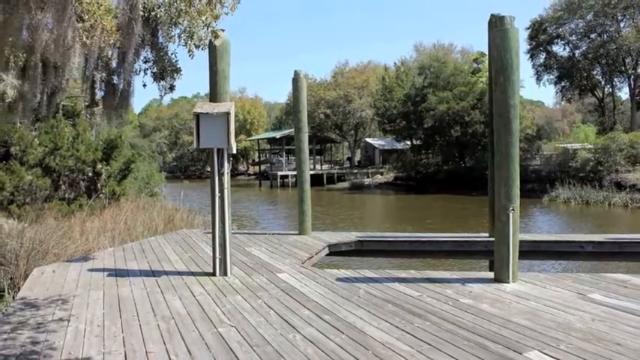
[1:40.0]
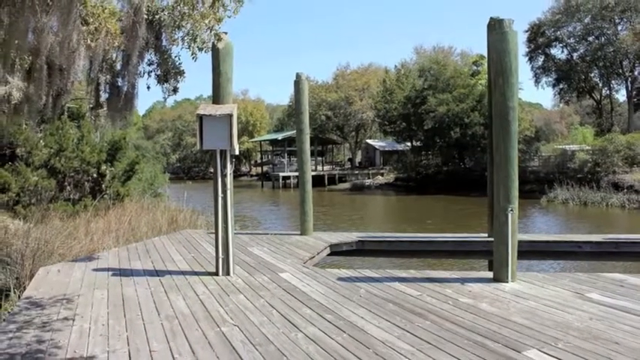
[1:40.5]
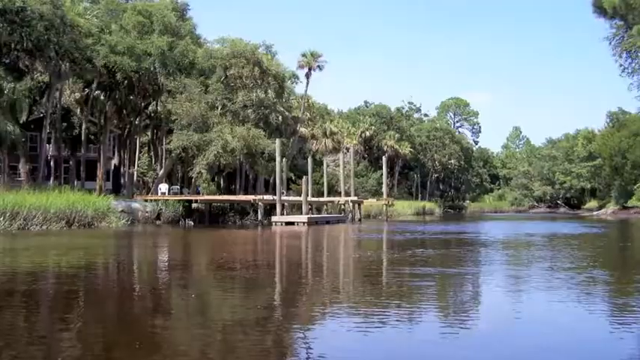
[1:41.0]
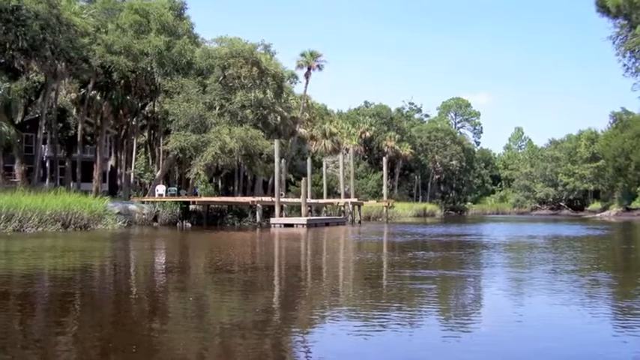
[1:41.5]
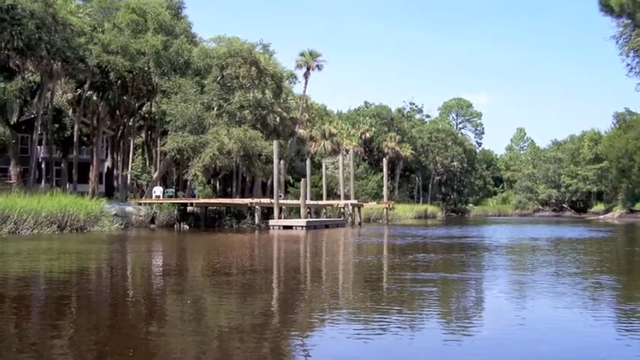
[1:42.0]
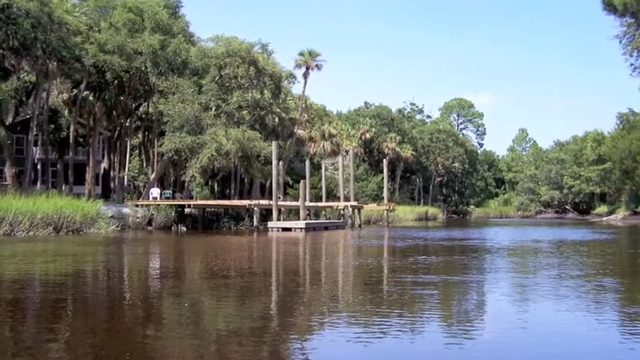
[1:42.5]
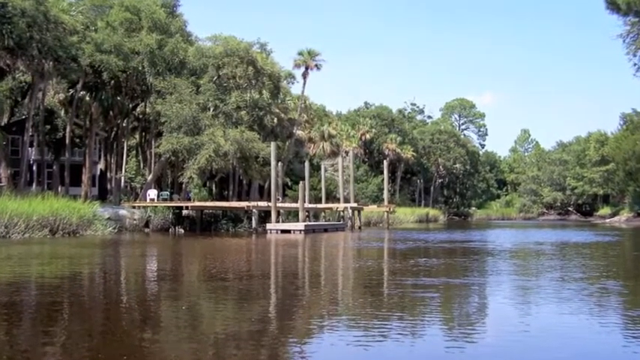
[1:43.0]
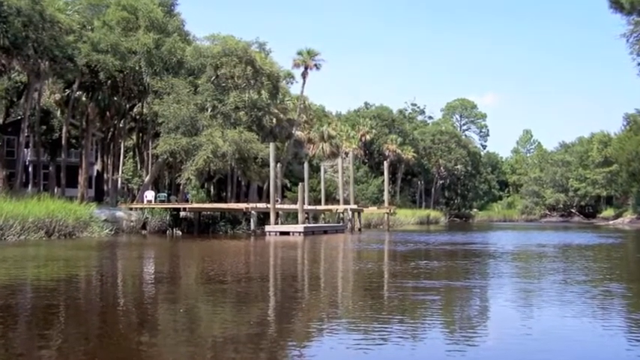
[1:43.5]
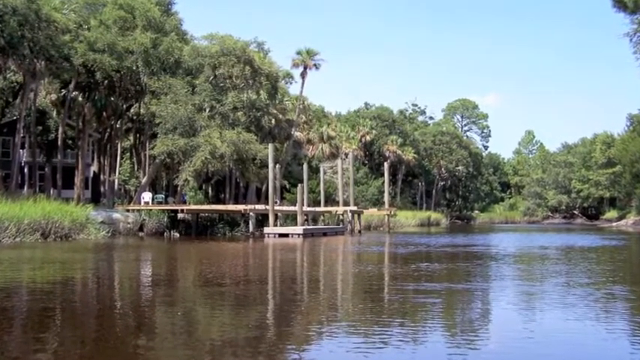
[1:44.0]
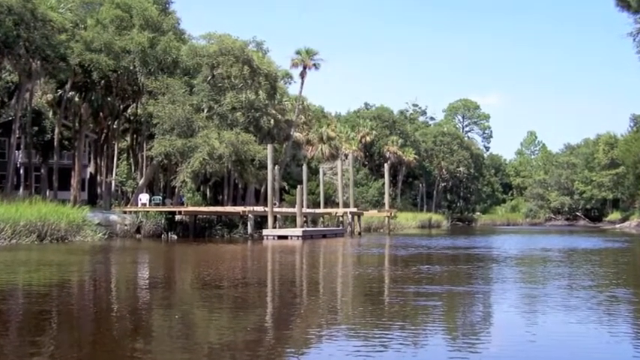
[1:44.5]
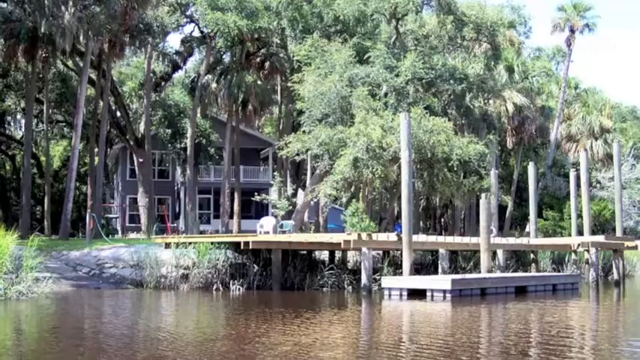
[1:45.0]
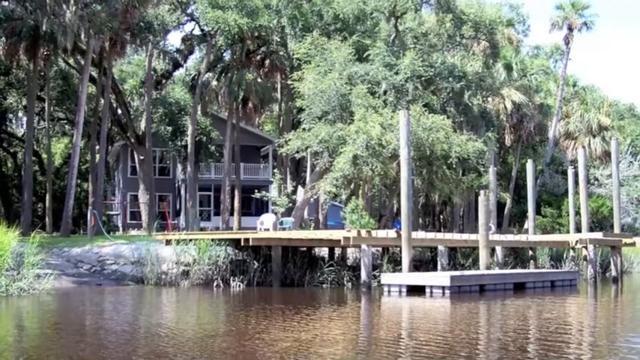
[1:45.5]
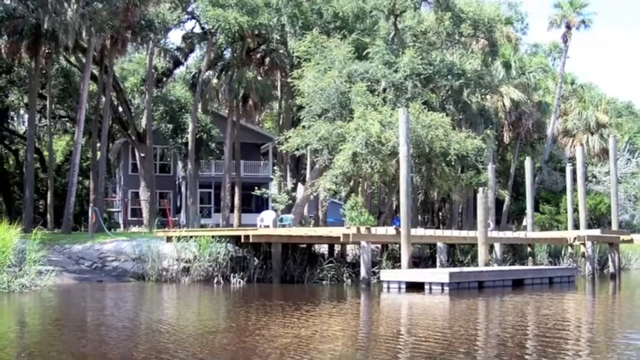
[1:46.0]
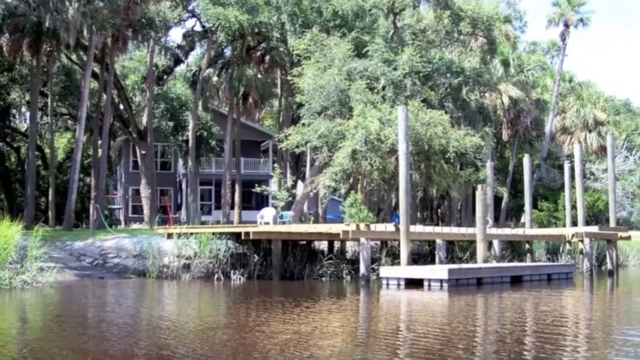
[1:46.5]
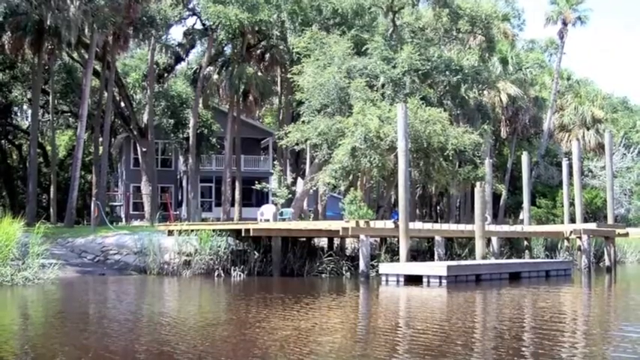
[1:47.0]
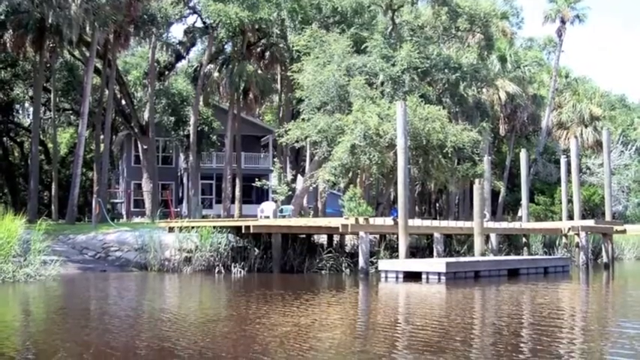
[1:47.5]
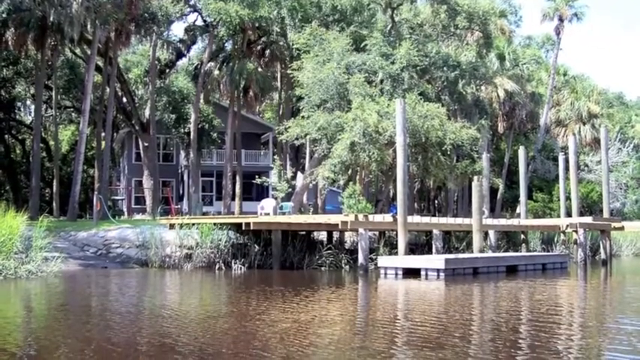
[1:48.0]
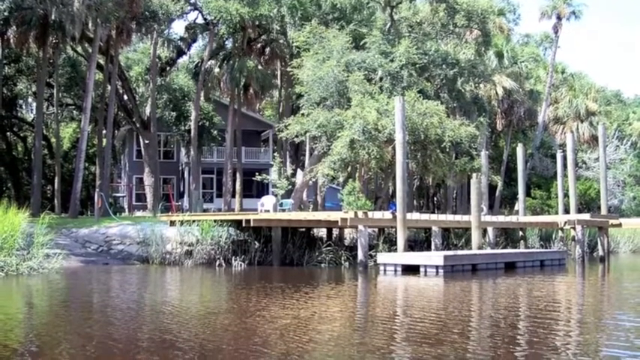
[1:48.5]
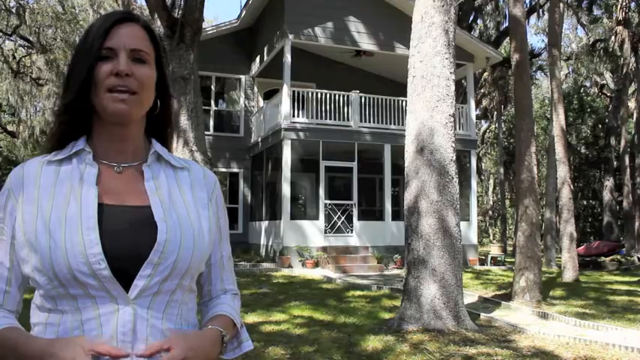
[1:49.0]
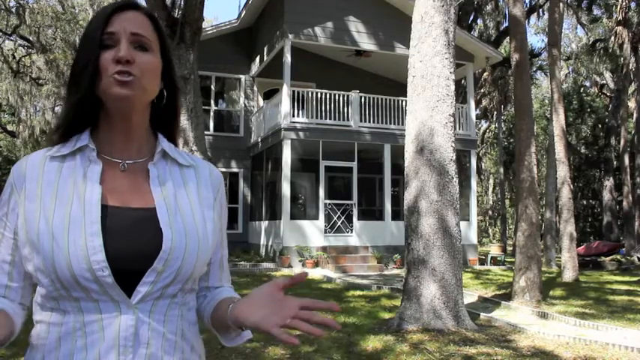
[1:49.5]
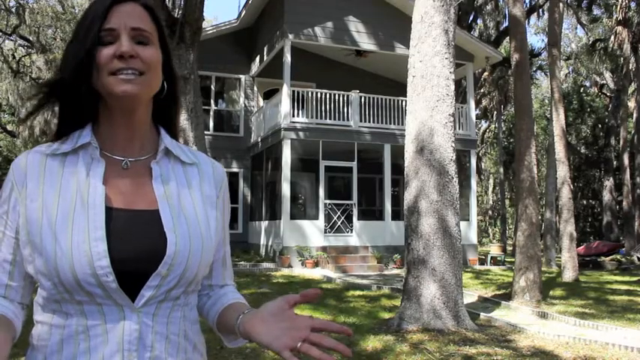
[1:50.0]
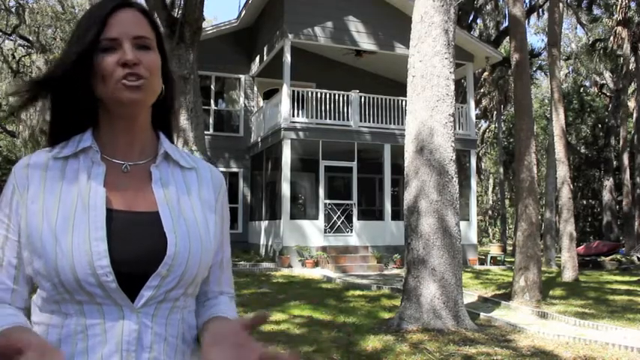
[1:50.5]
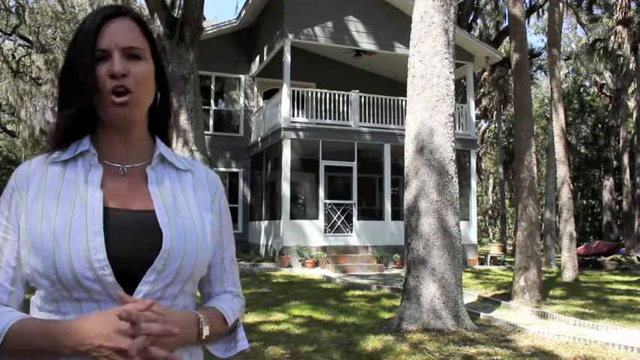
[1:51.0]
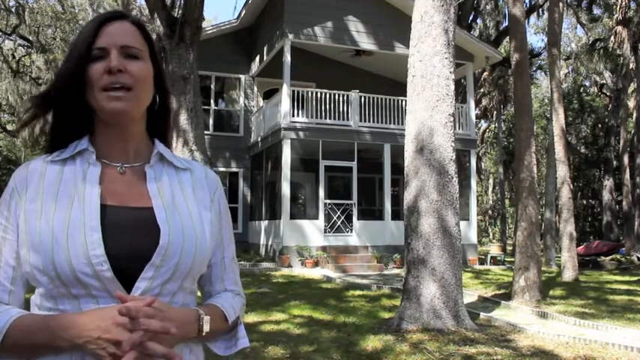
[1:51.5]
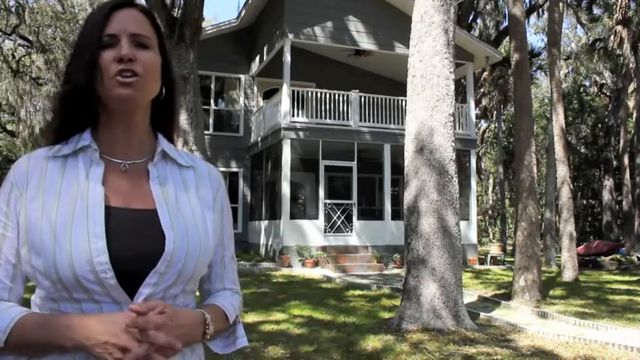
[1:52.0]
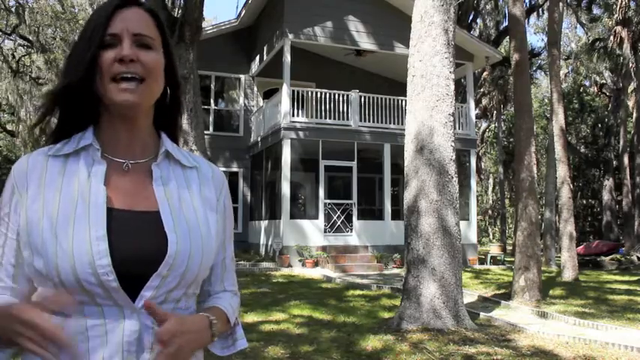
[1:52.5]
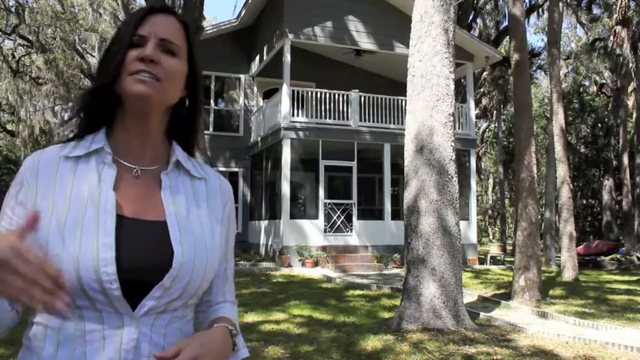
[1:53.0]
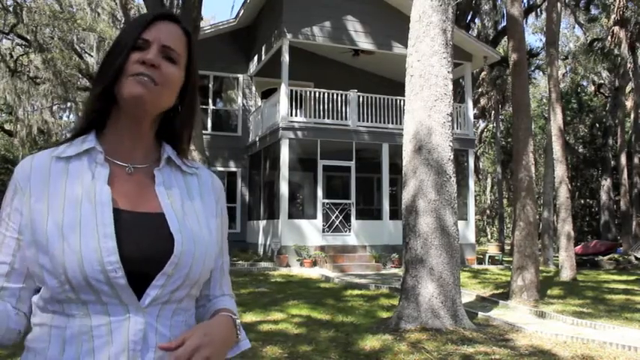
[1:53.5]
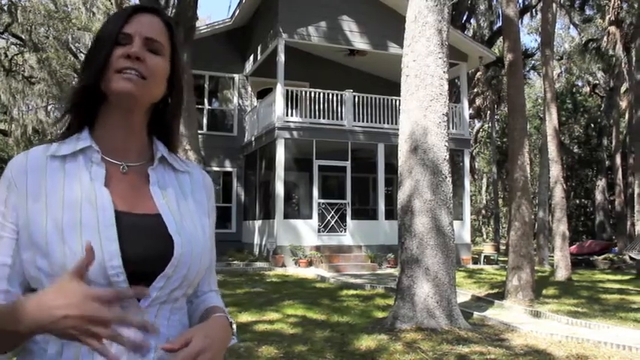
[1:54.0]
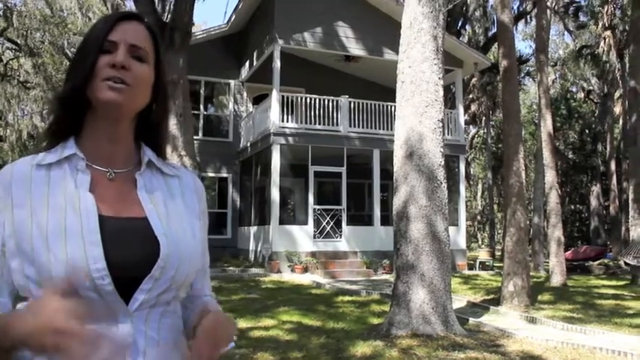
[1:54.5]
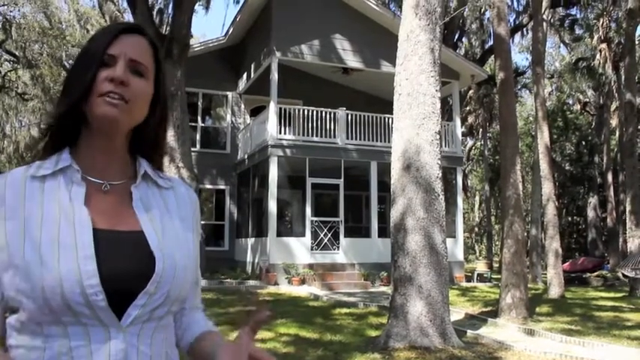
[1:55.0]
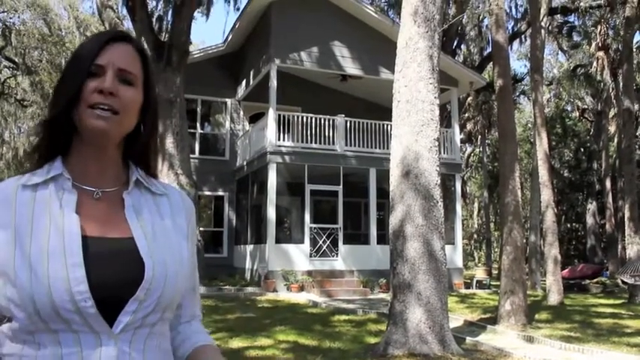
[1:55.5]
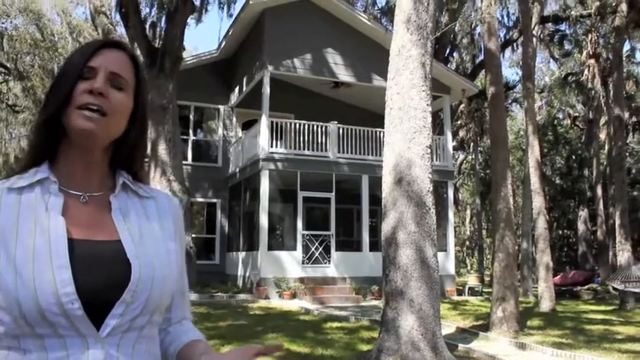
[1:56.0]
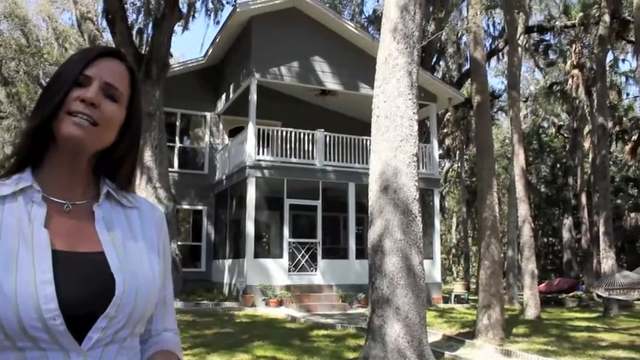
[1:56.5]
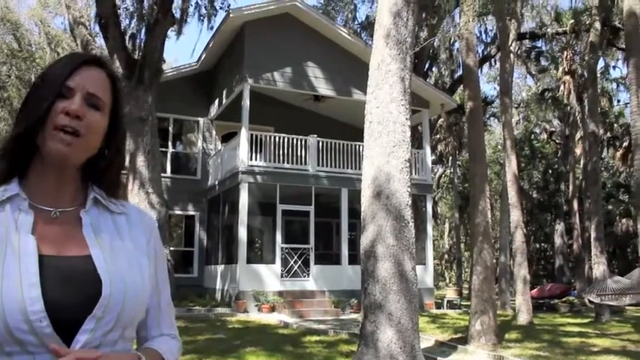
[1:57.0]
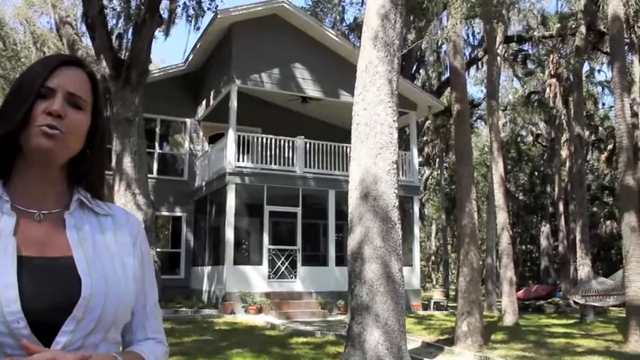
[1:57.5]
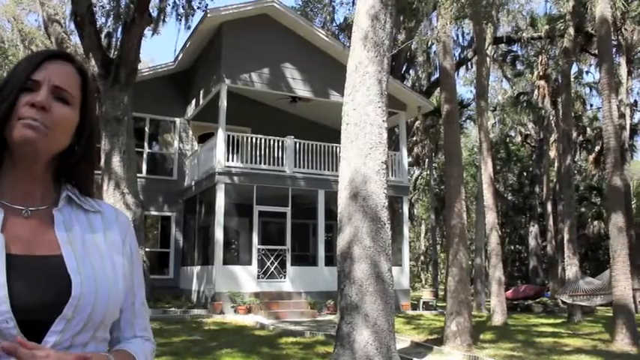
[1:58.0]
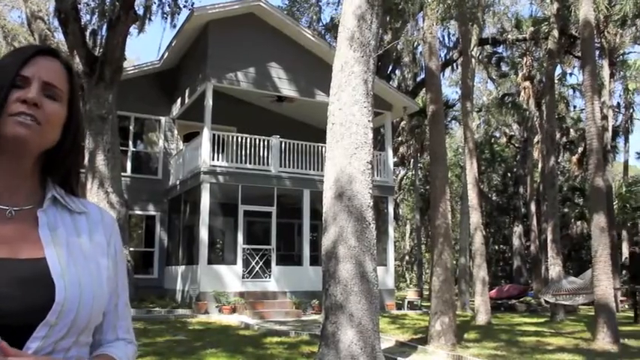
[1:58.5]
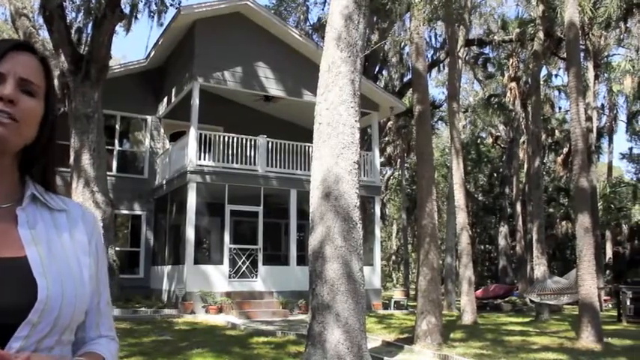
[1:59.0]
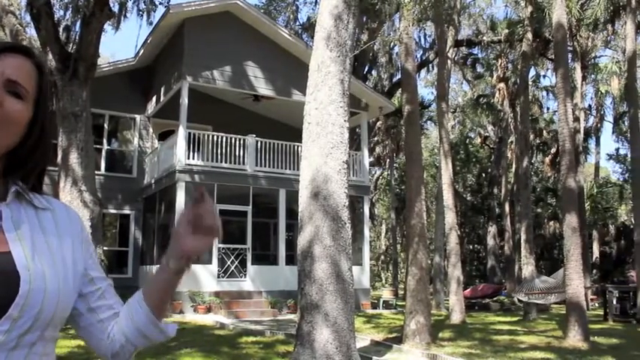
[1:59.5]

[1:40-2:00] Another view shows the fishing lake, possibly from the opposite side, where the water looks a bit murky, surrounded by trees. The jetty has a lower area. The camera moves towards the side of the lake with the house, showing the lower pontoon that can be stepped down onto from the upper decking. Some sloping ground appears to run straight into the lake. Lots of foliage and trees are visible, particularly on the right side. There is a front lawn with a seating area, and the camera pans back from there to show more of the facilities.